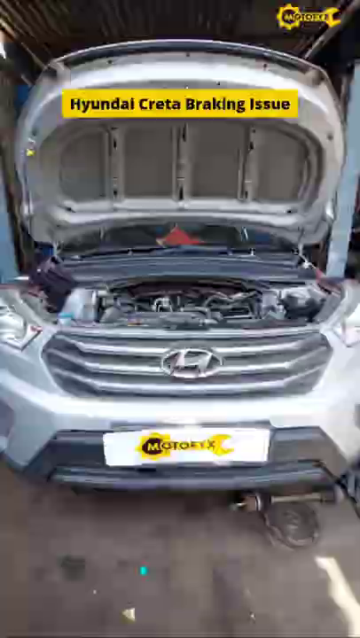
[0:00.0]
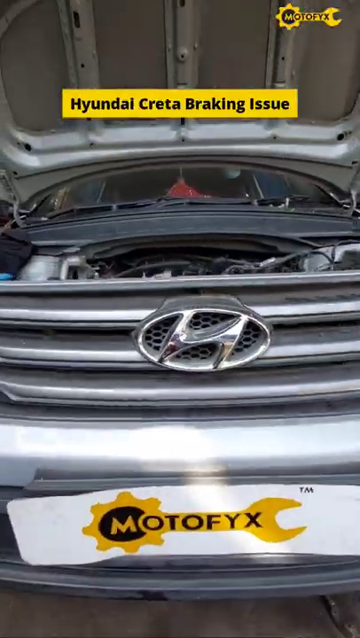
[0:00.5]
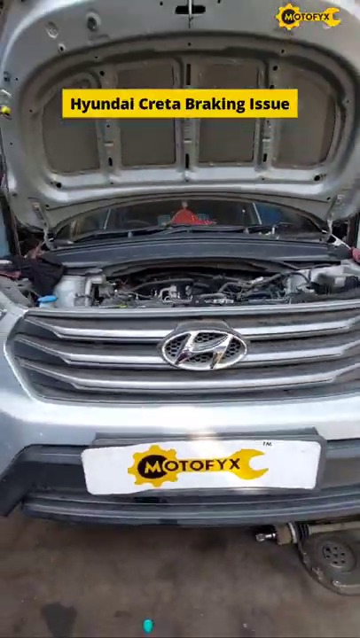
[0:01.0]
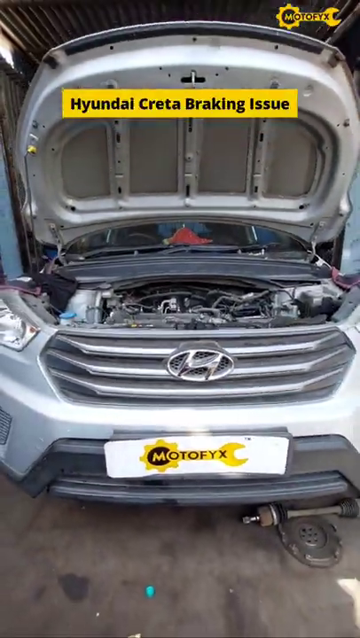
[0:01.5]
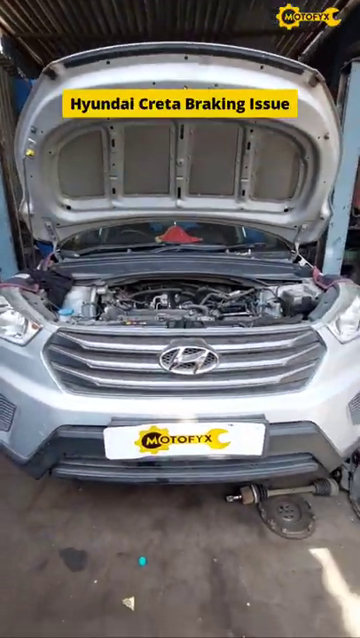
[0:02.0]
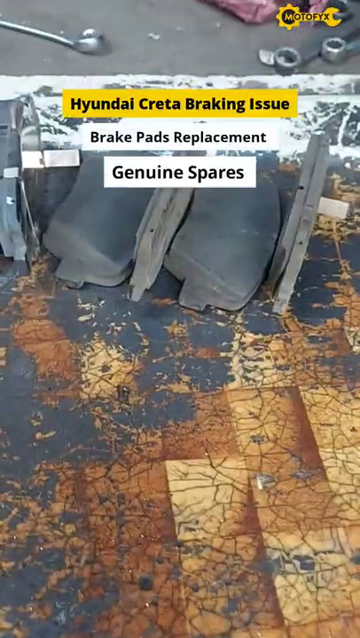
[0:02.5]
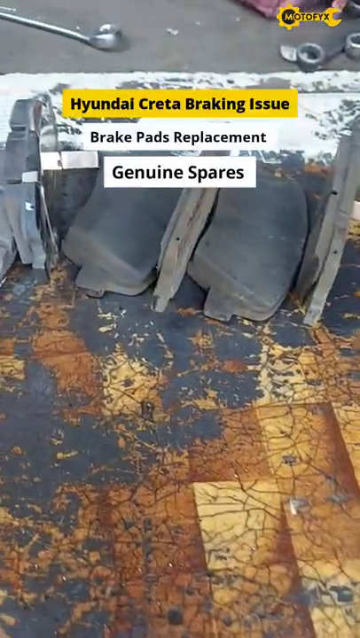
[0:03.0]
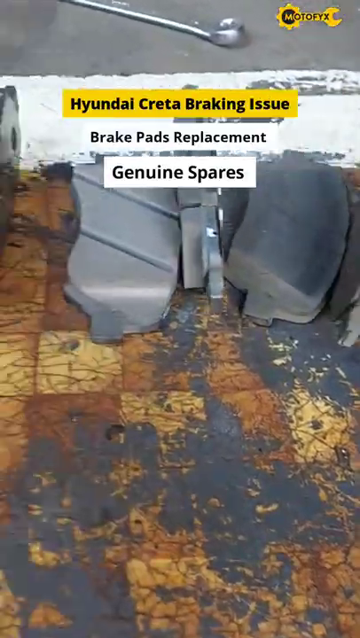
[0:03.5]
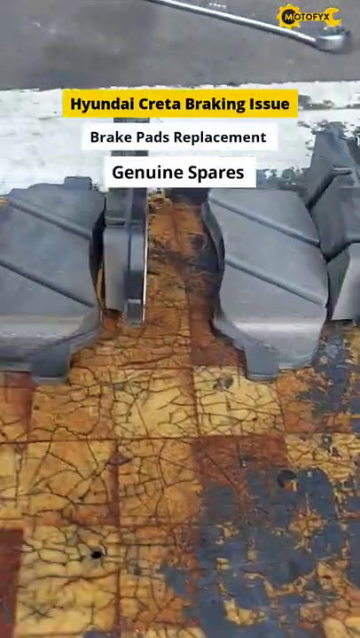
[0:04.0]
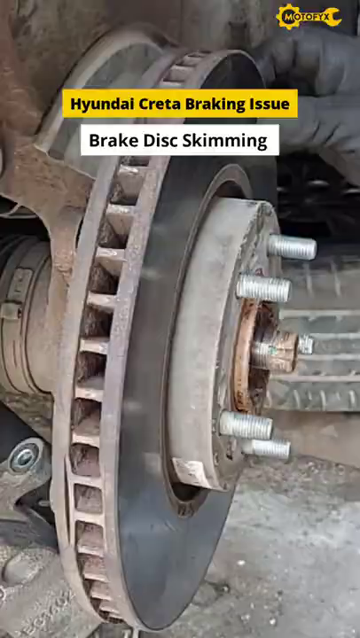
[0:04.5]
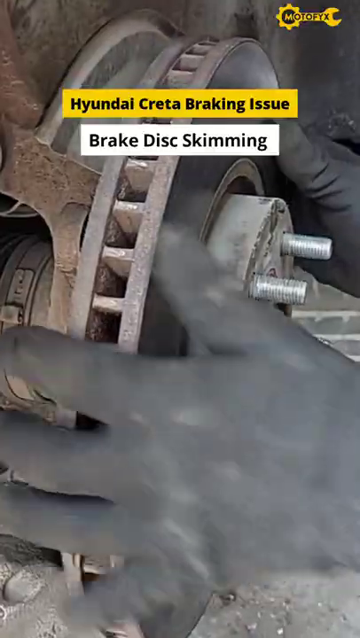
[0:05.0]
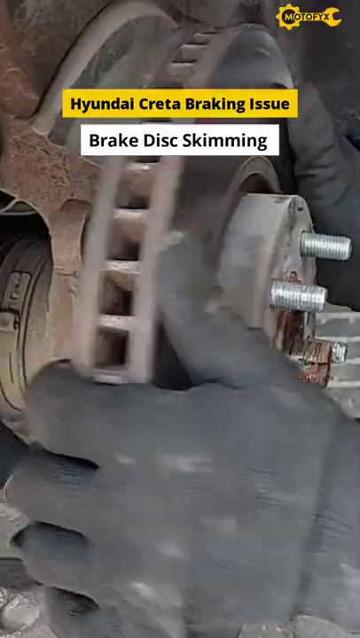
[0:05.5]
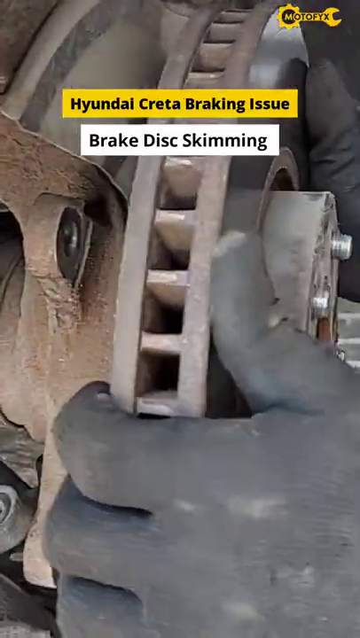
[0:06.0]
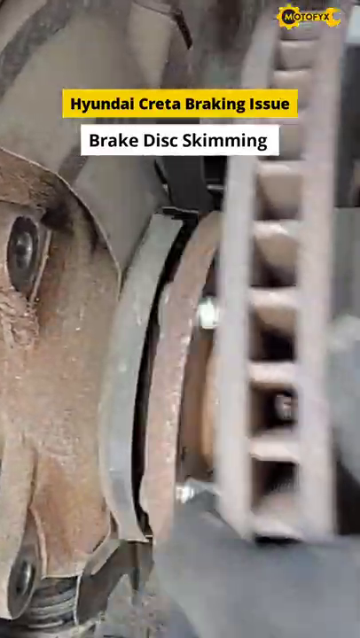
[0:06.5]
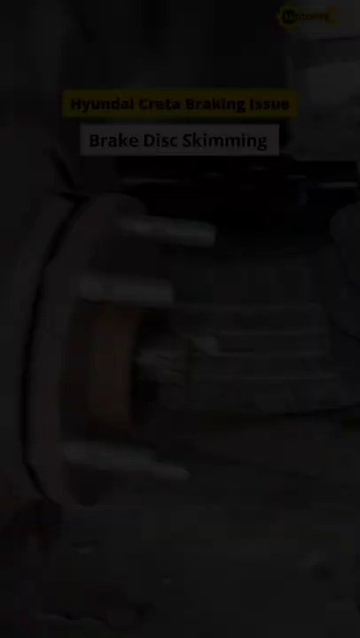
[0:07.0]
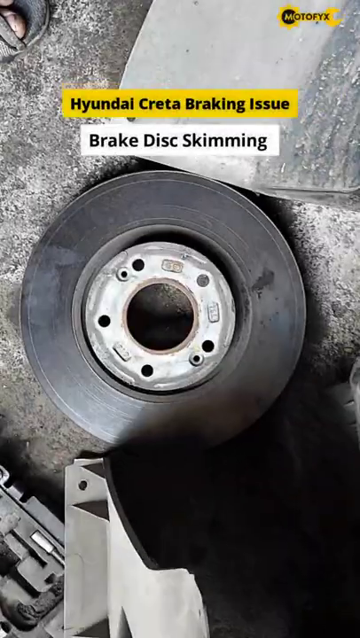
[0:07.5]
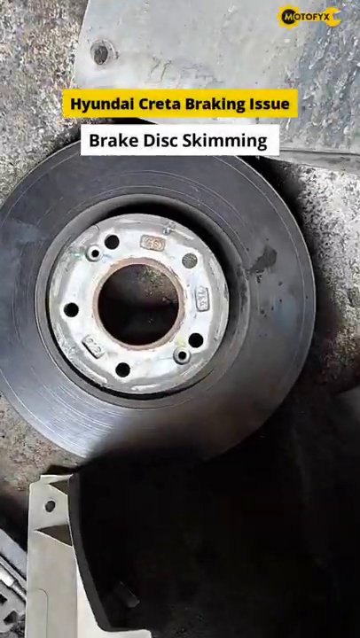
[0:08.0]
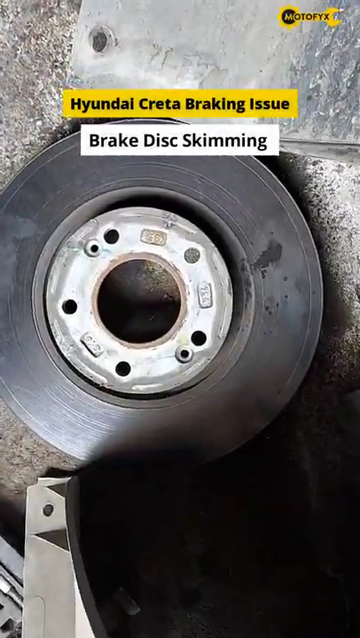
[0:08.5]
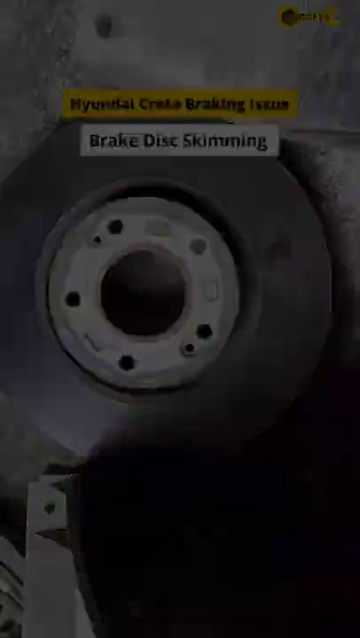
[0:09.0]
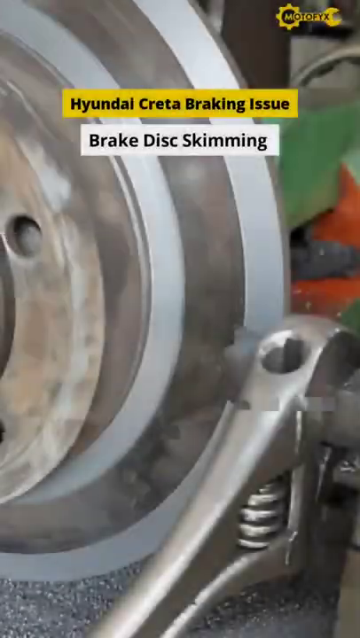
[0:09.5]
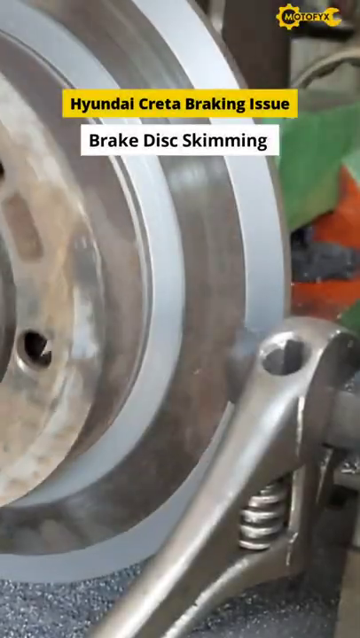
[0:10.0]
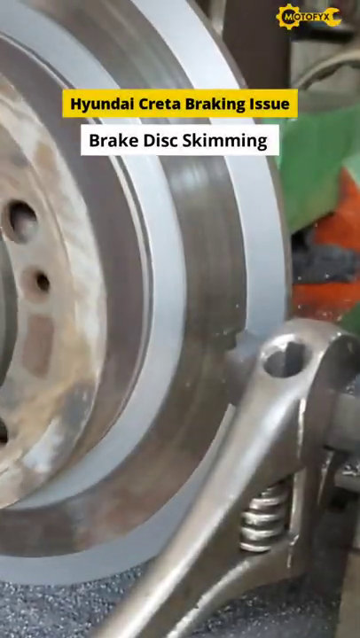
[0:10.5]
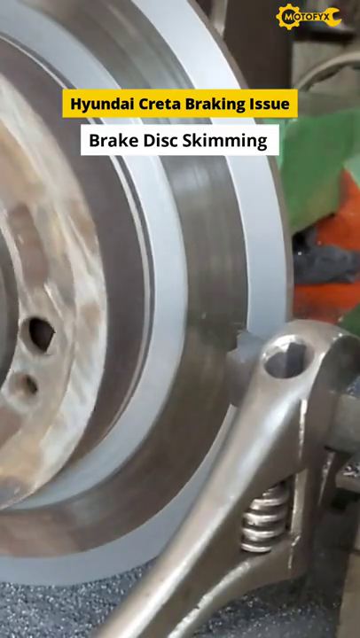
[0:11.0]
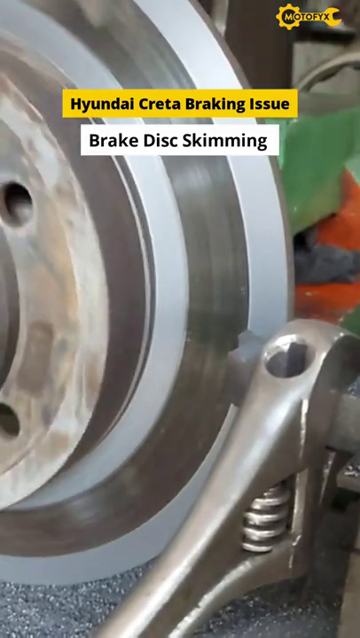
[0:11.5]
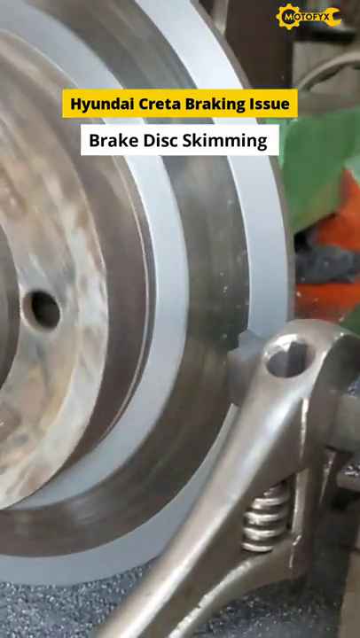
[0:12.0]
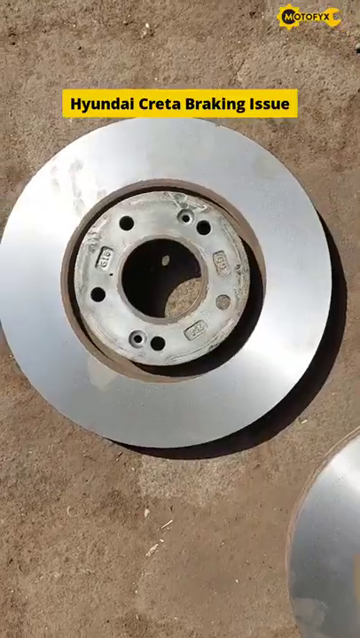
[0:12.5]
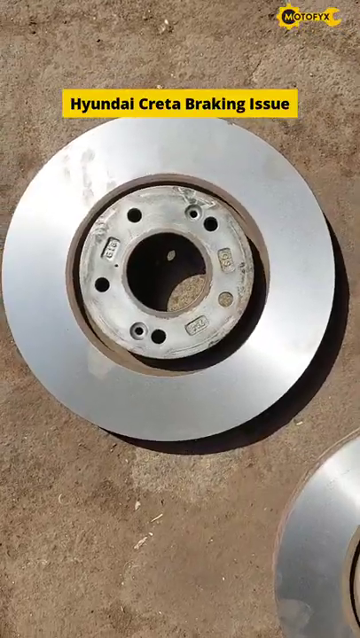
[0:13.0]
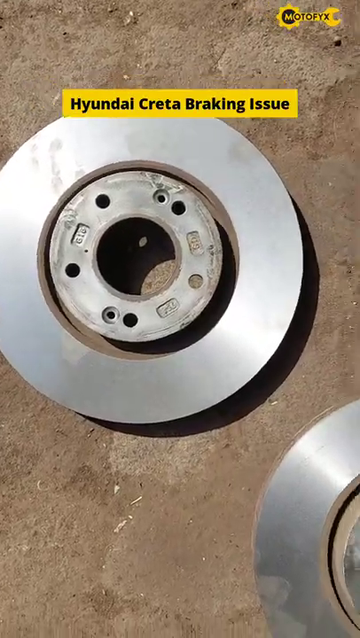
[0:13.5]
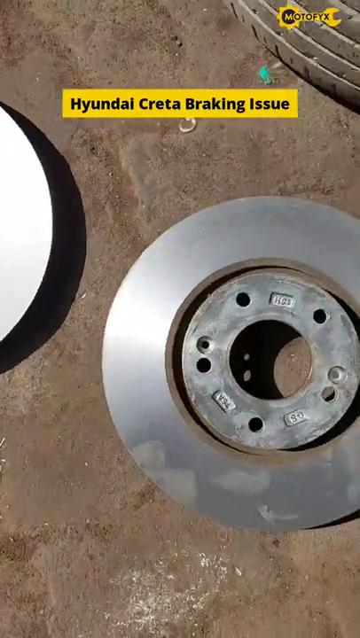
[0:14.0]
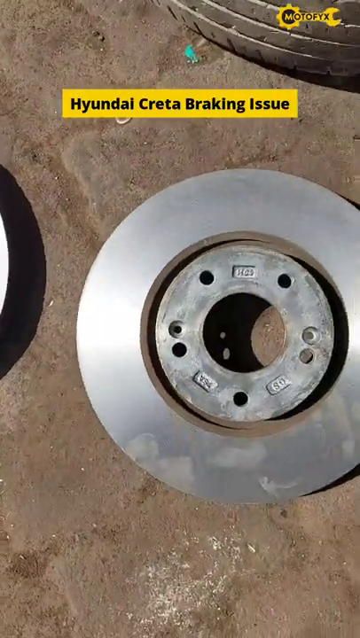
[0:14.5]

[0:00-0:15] The video opens with the text "Hyundai Creta braking issue solution." A Hyundai car is shown with its engine open, and writing at the top reads "Hyundai Creta braking issues, brake pad replacements, genuine spares." A person wearing gloves pulls off the brake pads, and brake disc skimming is shown: the pads appear to rotate and get sharpened. The brake pads are then shown on the floor, seemingly as part of showing the repair process. The person doing the repairs is not seen, only their hands.